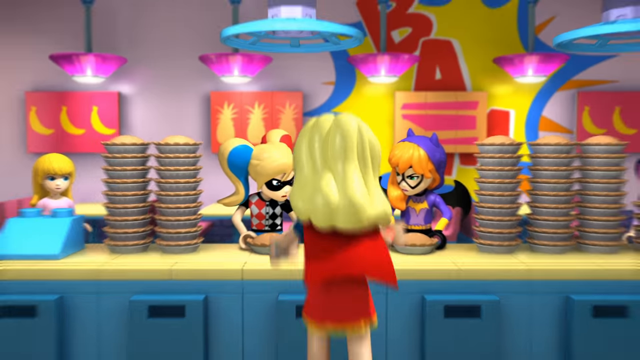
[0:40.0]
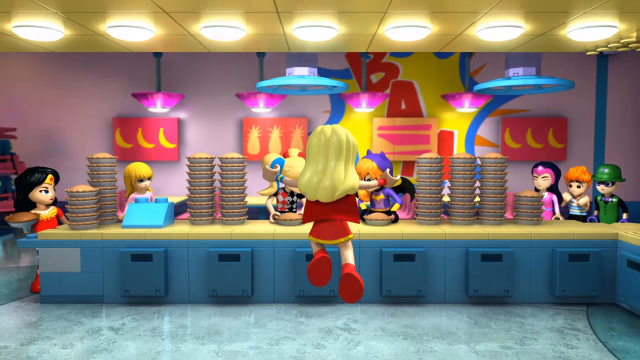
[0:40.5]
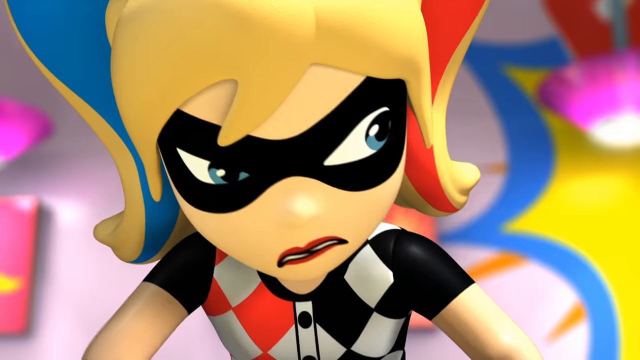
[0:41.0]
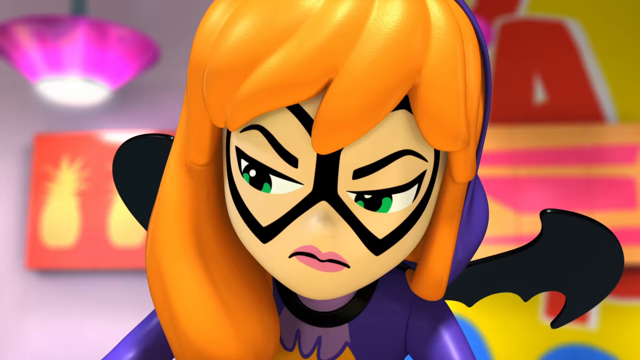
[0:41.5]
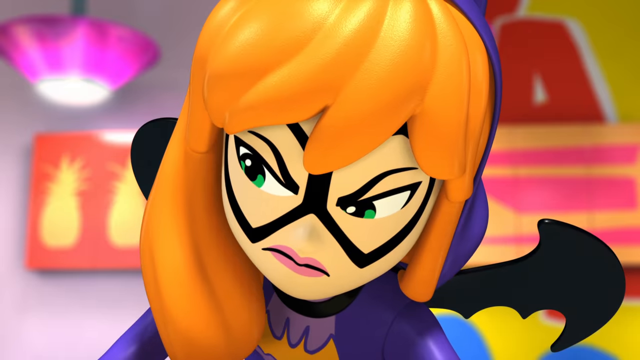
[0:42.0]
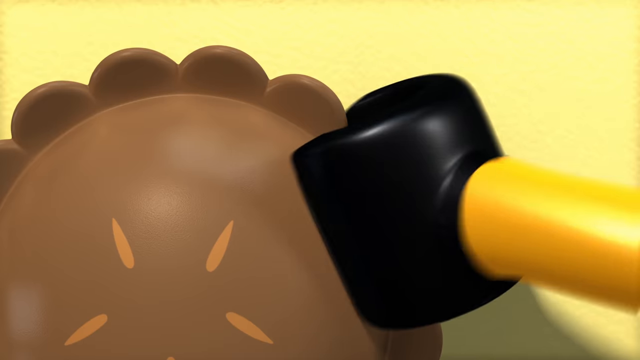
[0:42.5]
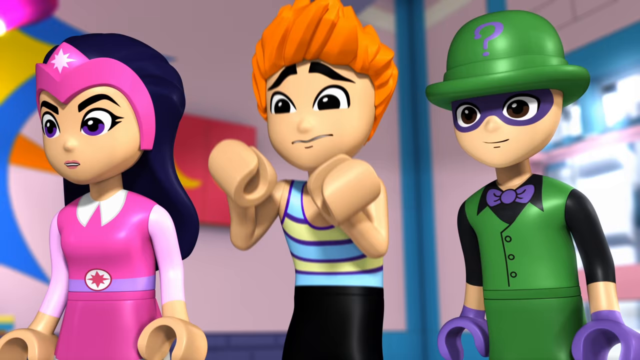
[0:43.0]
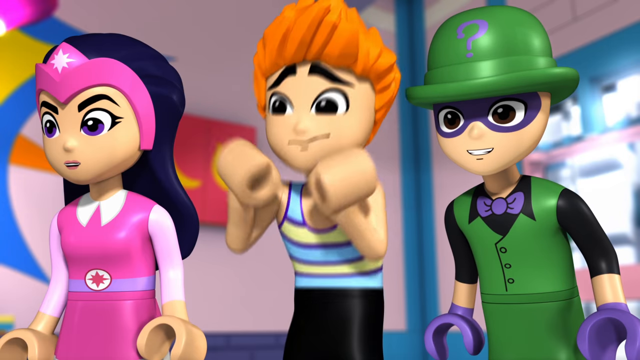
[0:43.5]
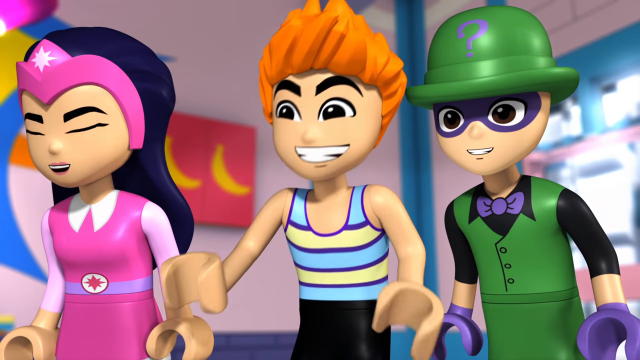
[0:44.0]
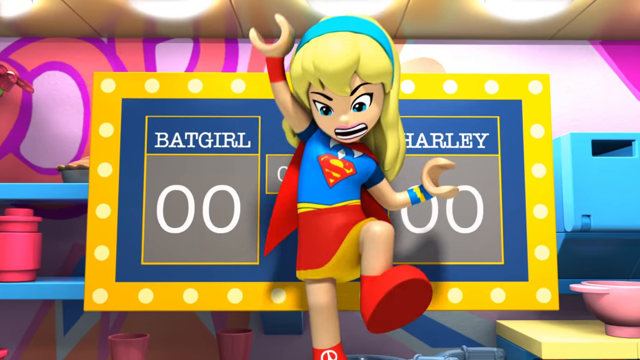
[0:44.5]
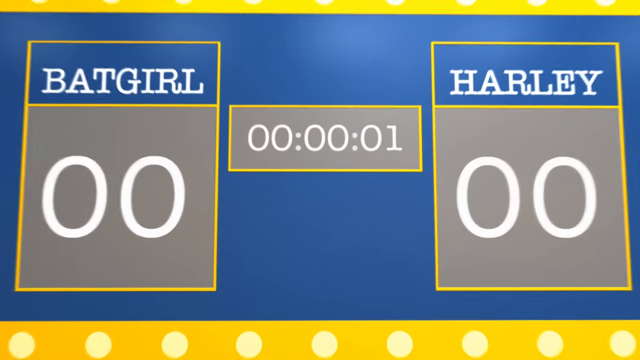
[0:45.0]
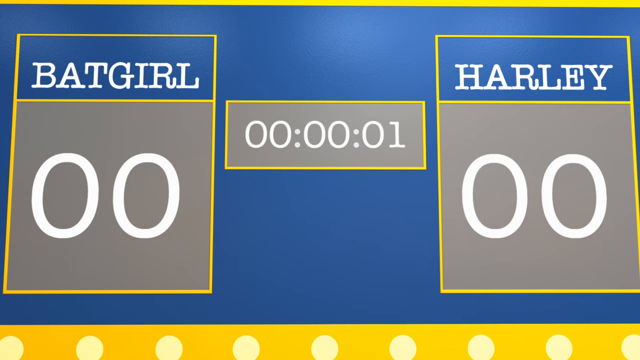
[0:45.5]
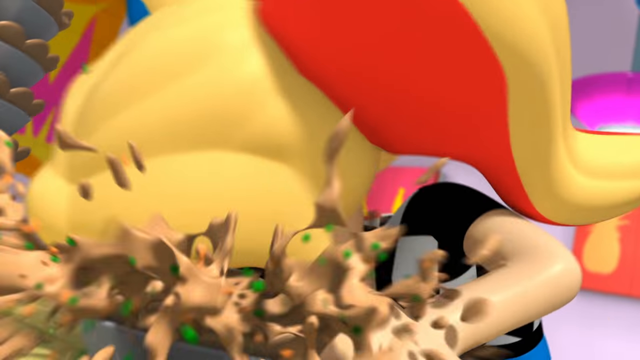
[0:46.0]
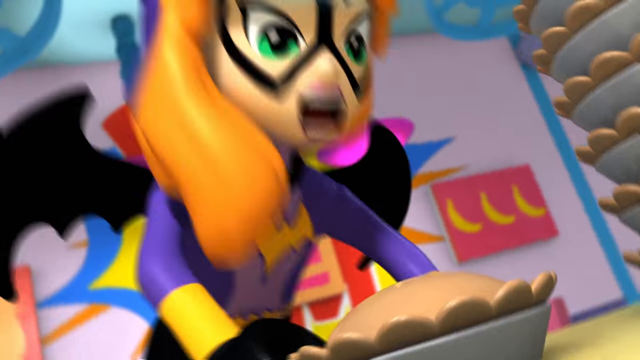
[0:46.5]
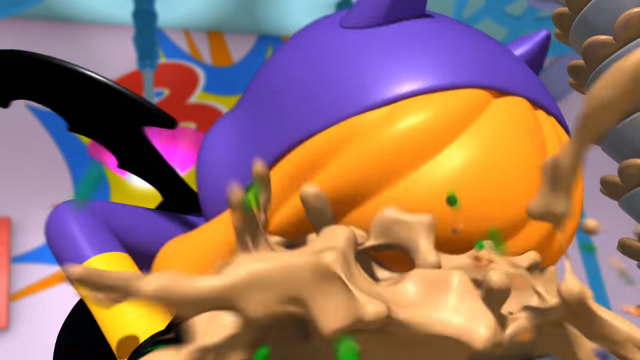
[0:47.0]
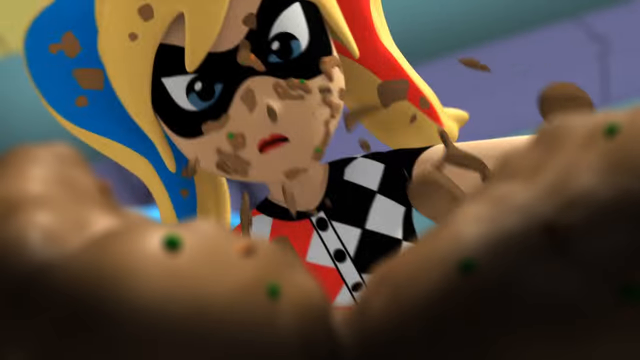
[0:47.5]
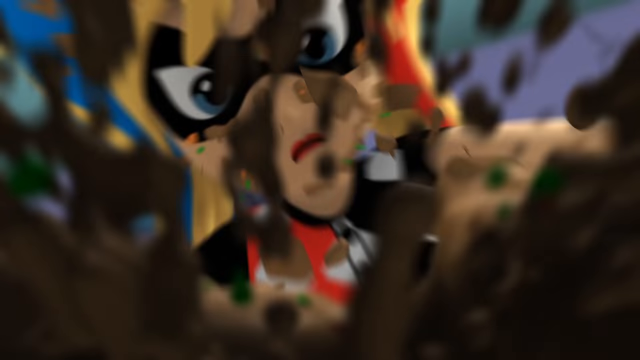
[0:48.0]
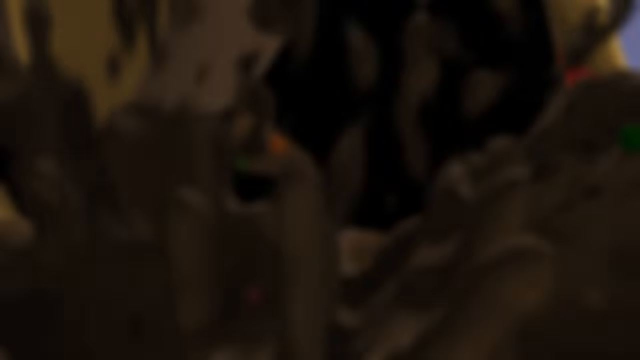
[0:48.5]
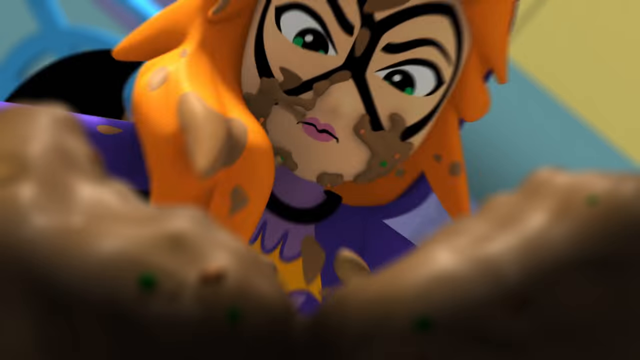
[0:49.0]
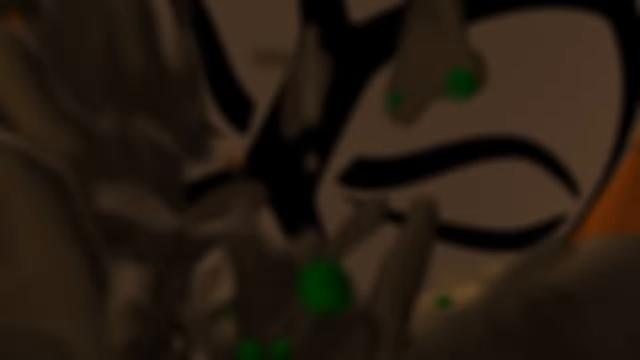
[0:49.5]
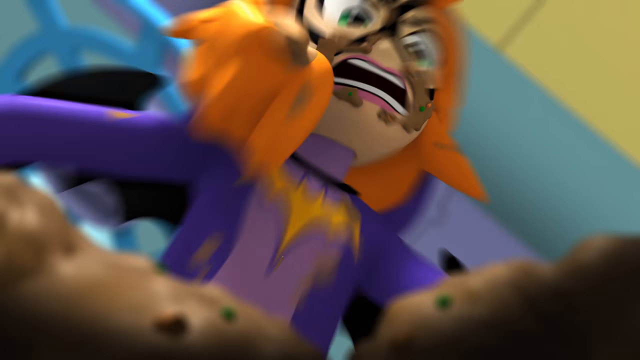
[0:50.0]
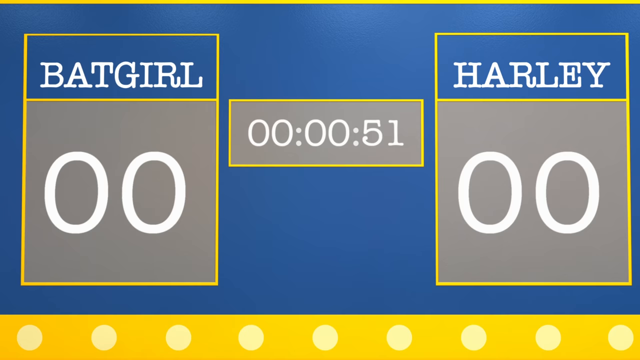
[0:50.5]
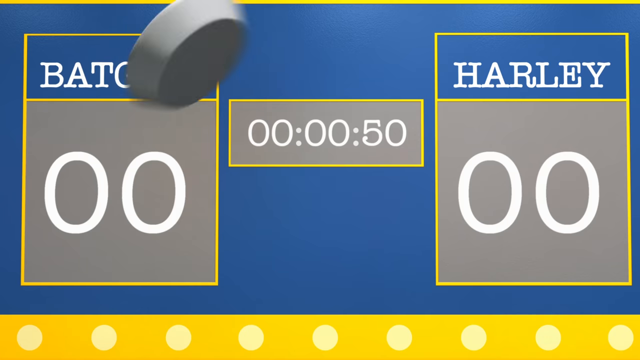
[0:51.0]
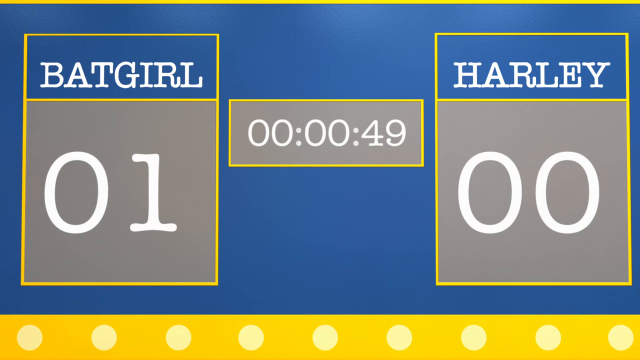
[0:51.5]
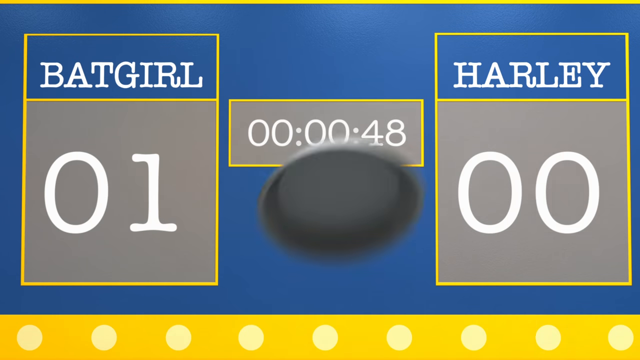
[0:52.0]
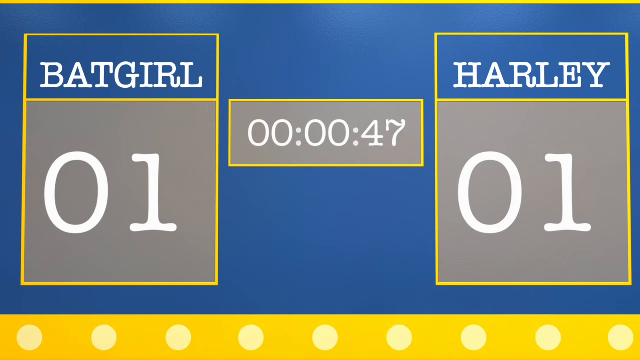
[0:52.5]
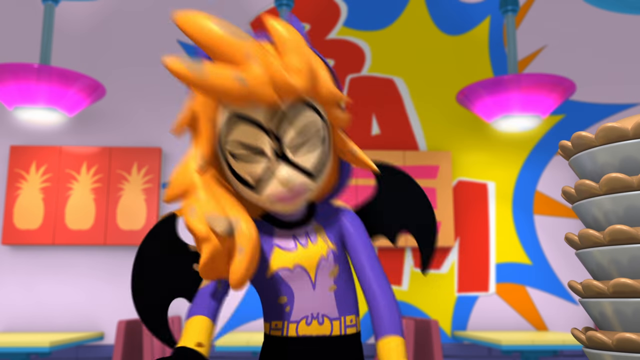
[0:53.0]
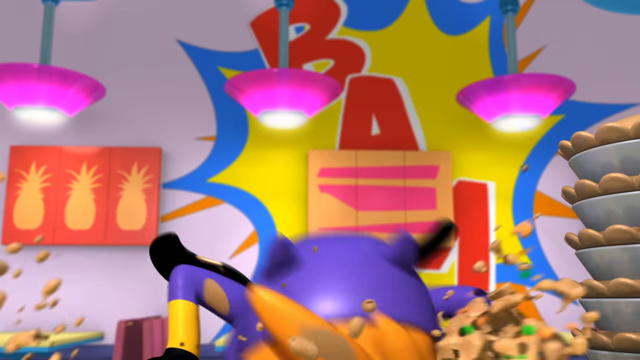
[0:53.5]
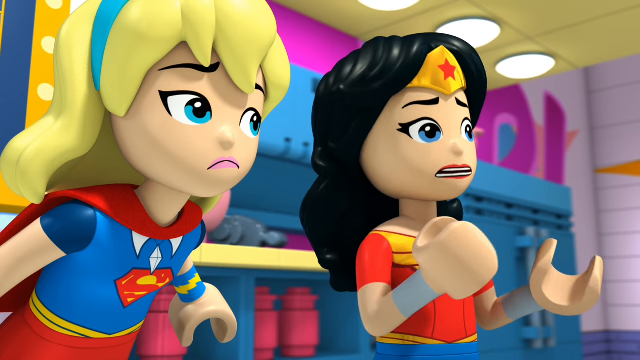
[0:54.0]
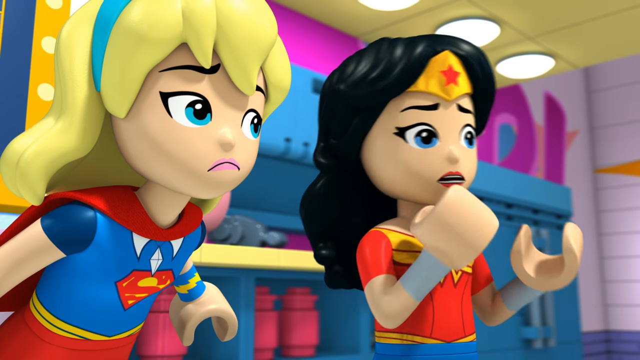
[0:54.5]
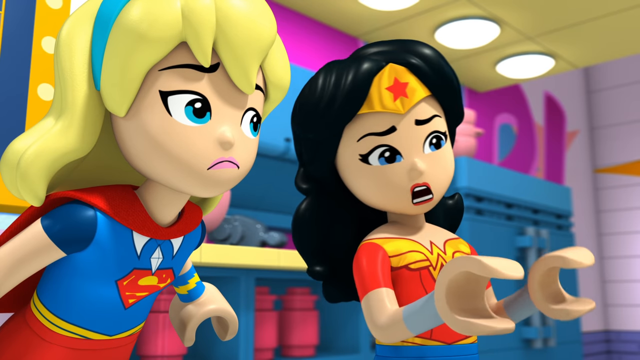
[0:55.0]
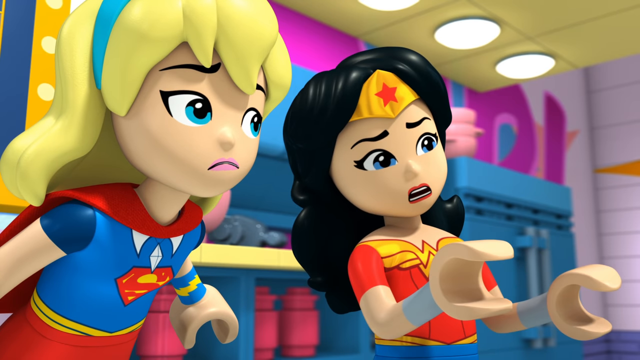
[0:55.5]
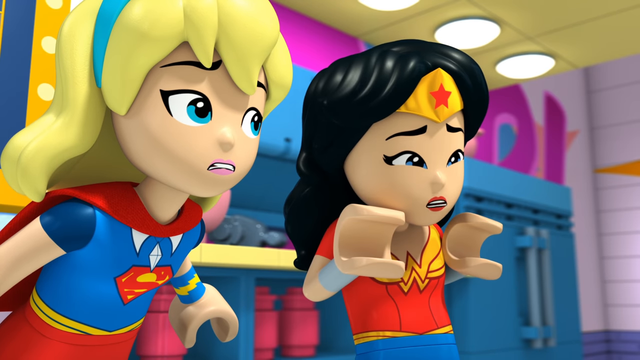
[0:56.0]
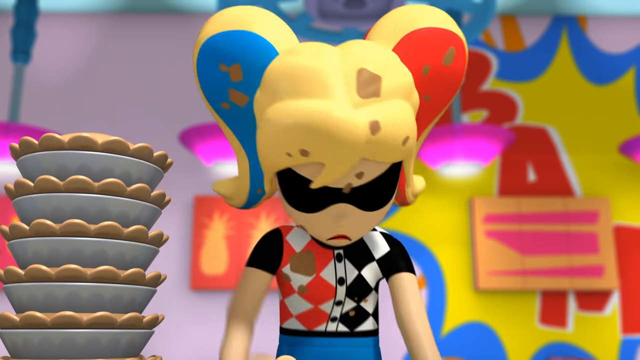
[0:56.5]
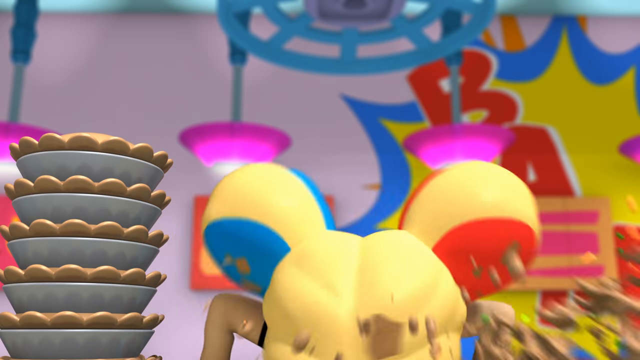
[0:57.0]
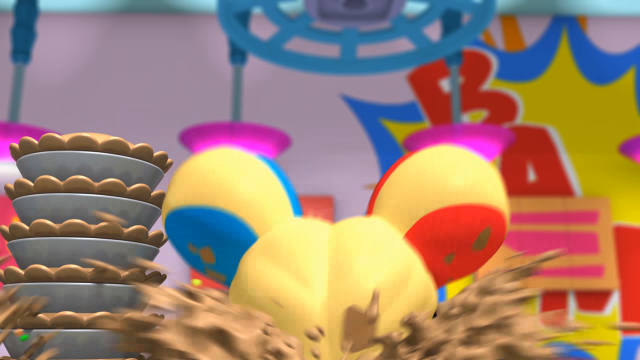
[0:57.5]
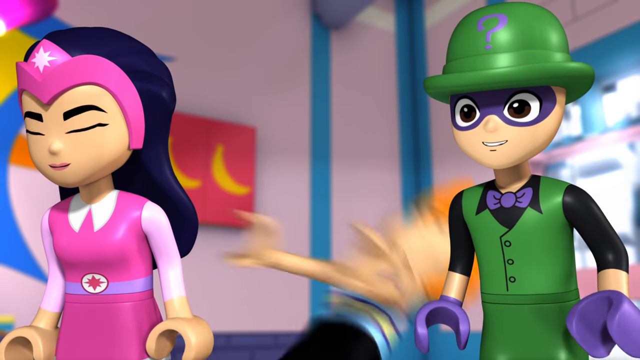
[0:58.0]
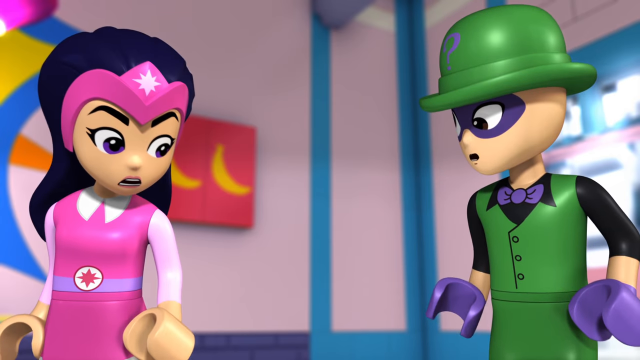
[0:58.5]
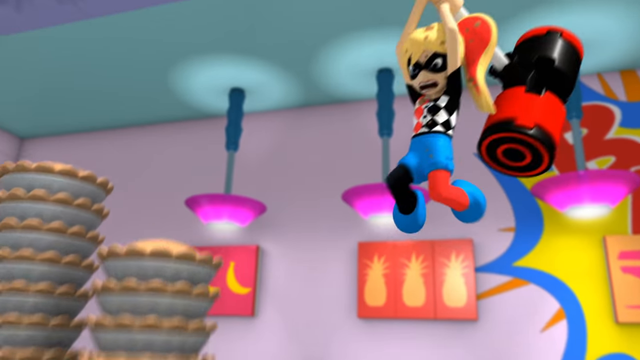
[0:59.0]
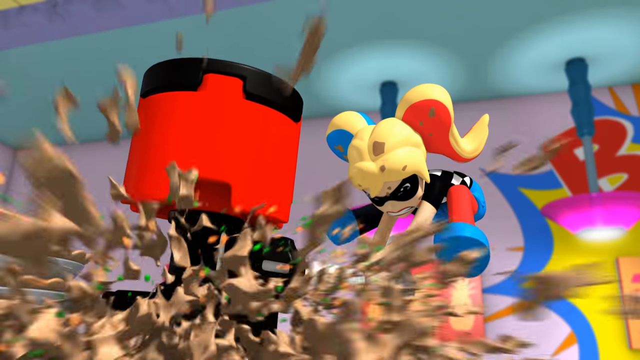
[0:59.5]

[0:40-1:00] Harley Quinn is on the left side of the table and Batgirl is on the right. Both have competitive, serious looks on their faces and look at each other, each with a pie in front of her and stacks of pies to the side; one squints her eyes a little as she looks at the other. Supergirl flies in front of the other side of the table. The camera zooms out, showing Wonder Woman and other unidentified characters, including three people in the corner, one possibly the Riddler with a green hat. Supergirl starts the race and both Harley Quinn and Batgirl begin eating pie. Wonder Woman stands next to Supergirl and says something as they compete.